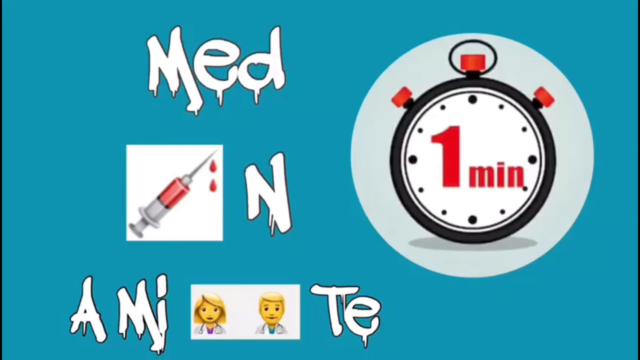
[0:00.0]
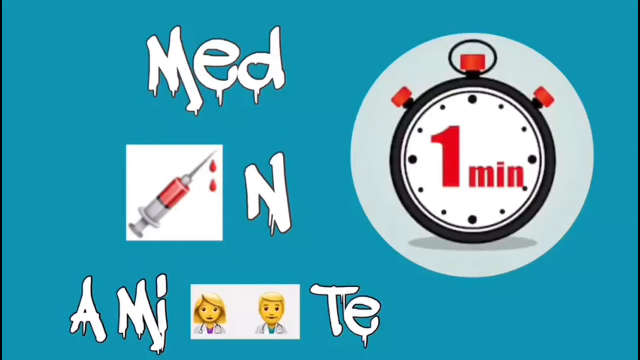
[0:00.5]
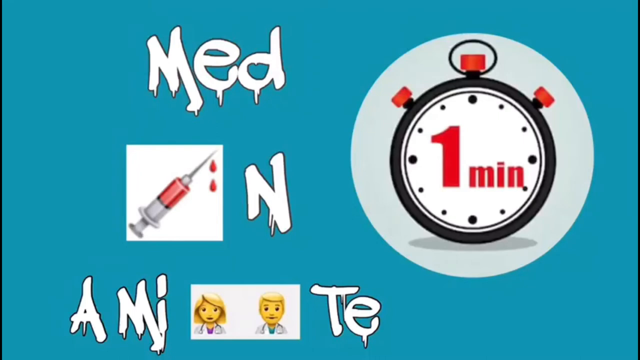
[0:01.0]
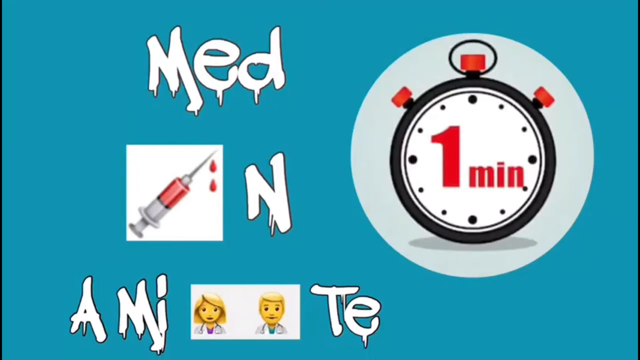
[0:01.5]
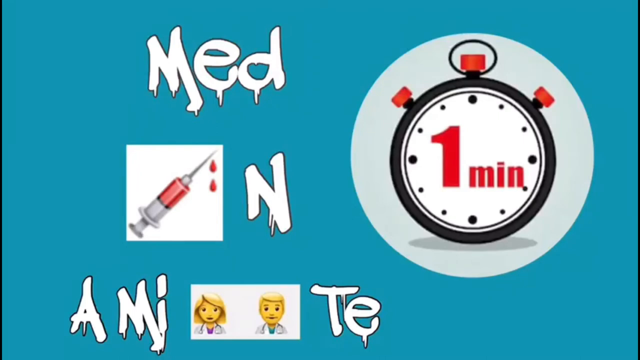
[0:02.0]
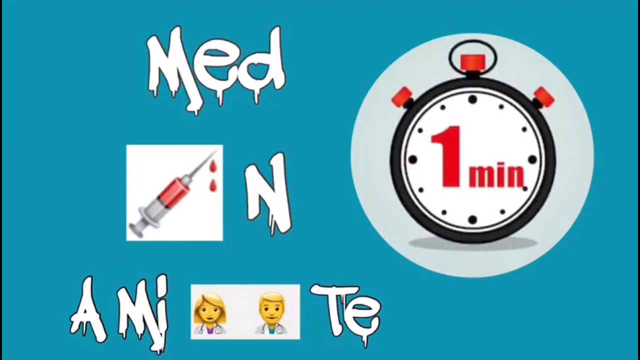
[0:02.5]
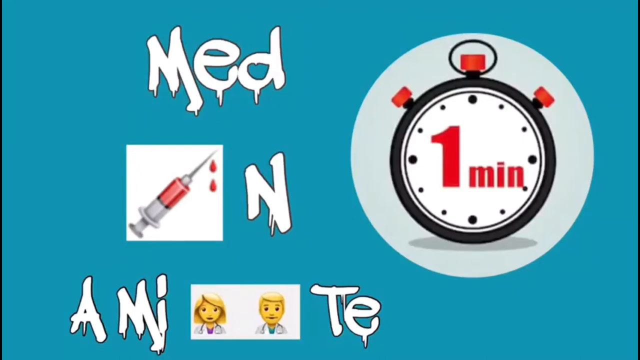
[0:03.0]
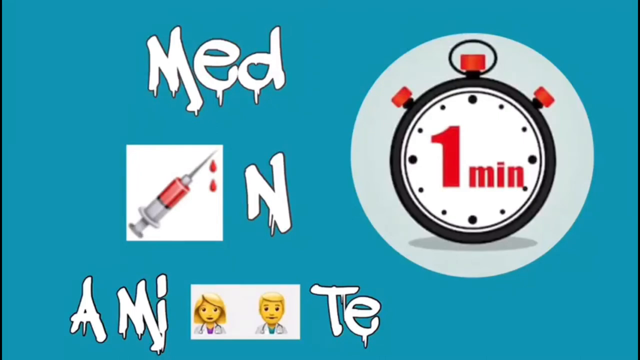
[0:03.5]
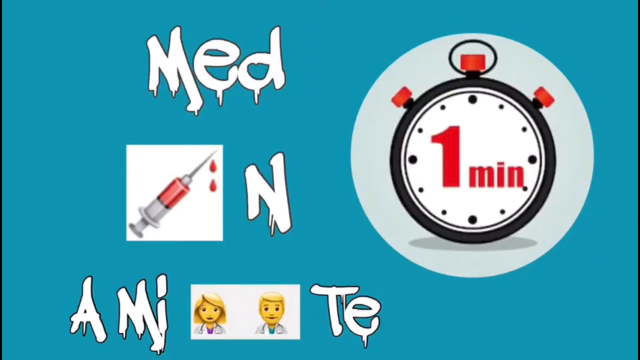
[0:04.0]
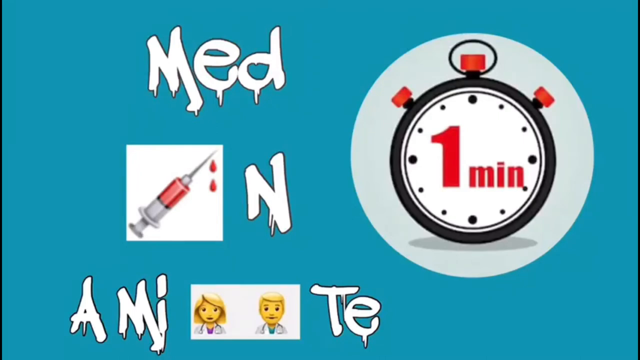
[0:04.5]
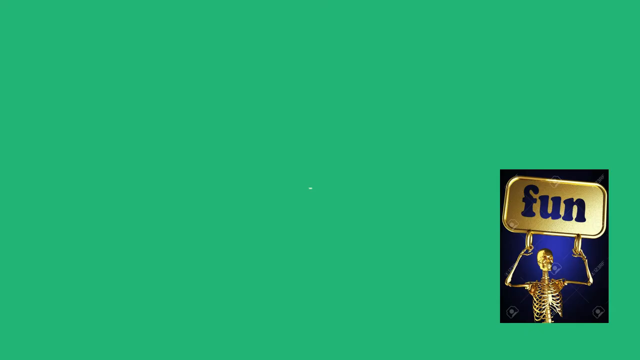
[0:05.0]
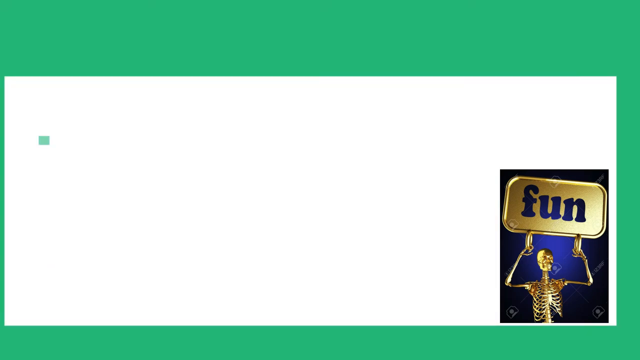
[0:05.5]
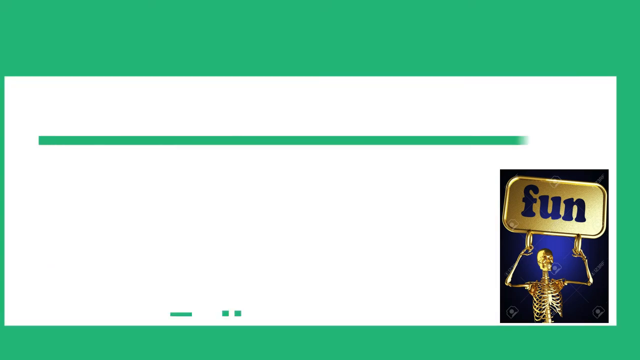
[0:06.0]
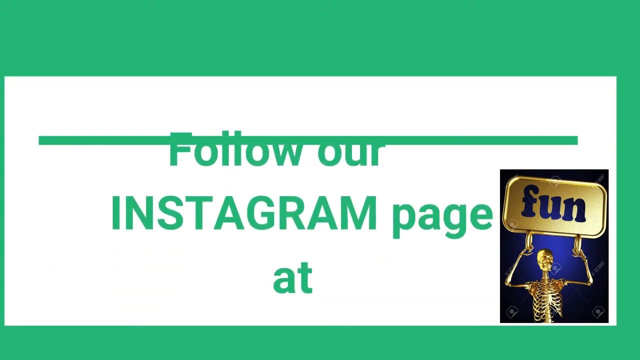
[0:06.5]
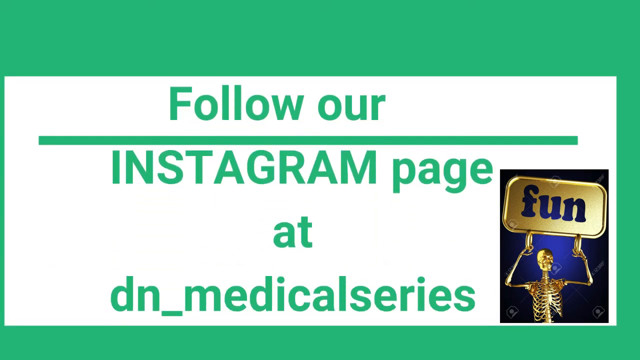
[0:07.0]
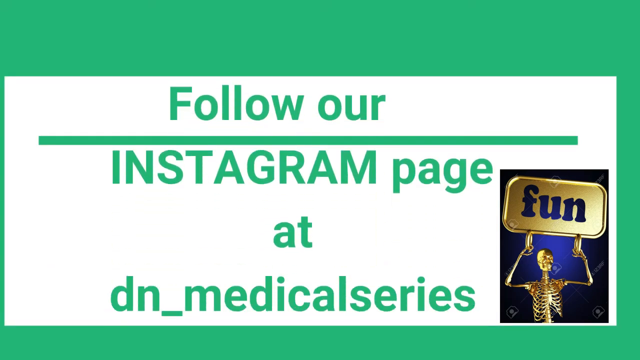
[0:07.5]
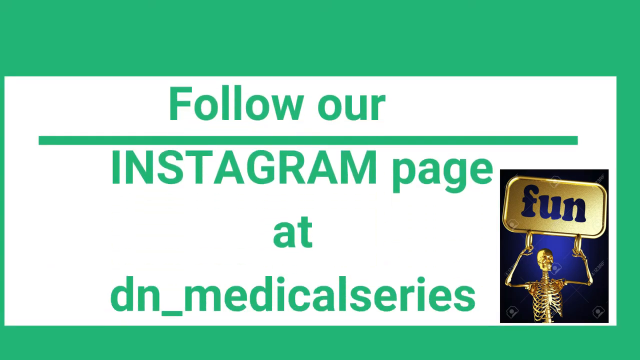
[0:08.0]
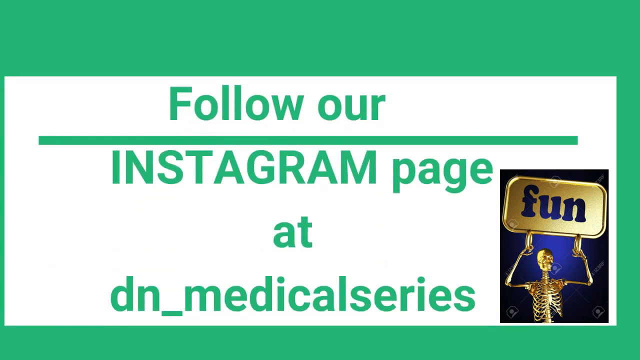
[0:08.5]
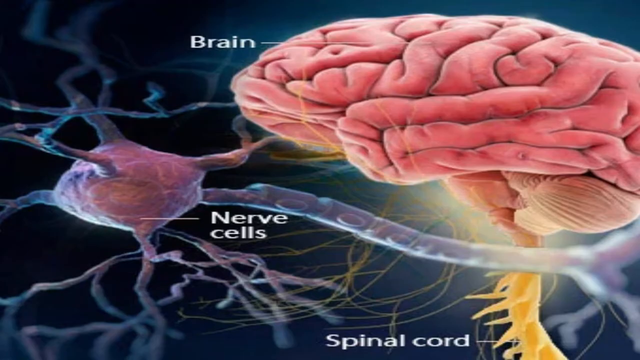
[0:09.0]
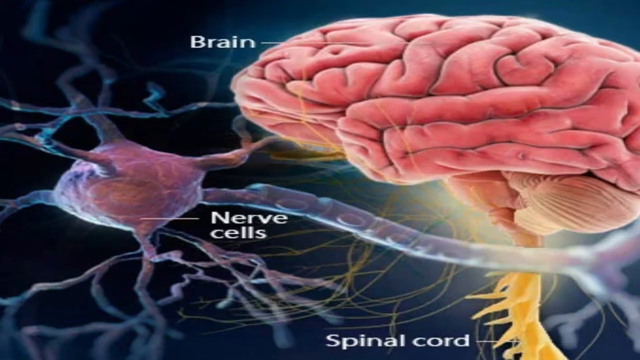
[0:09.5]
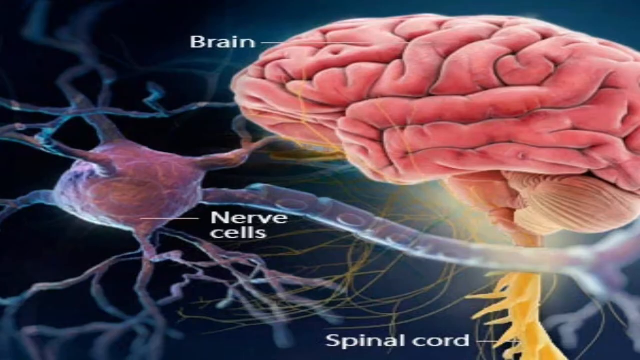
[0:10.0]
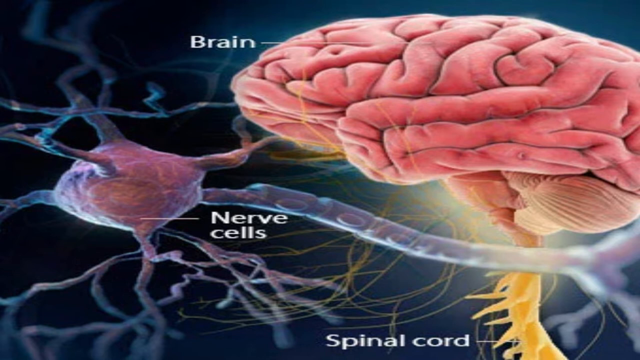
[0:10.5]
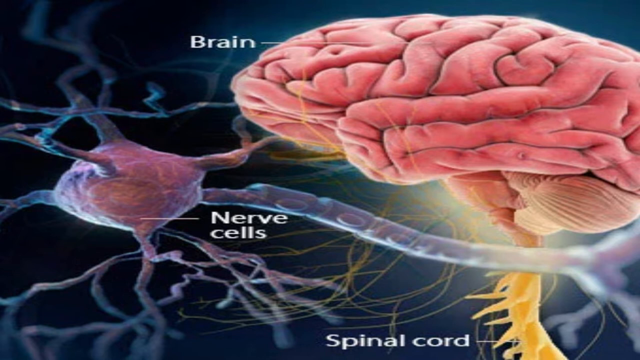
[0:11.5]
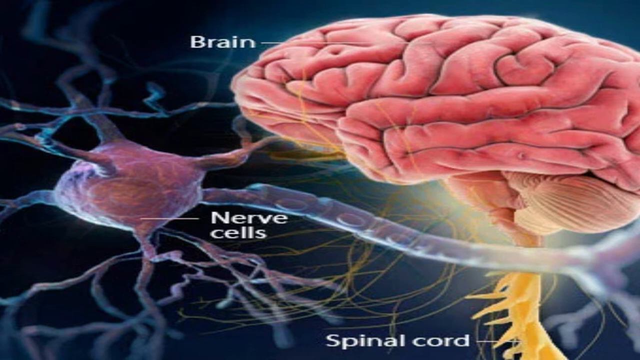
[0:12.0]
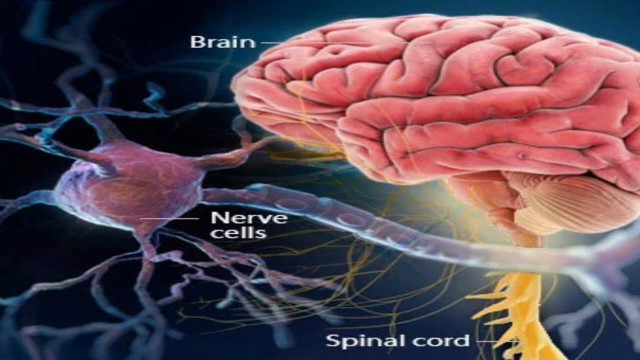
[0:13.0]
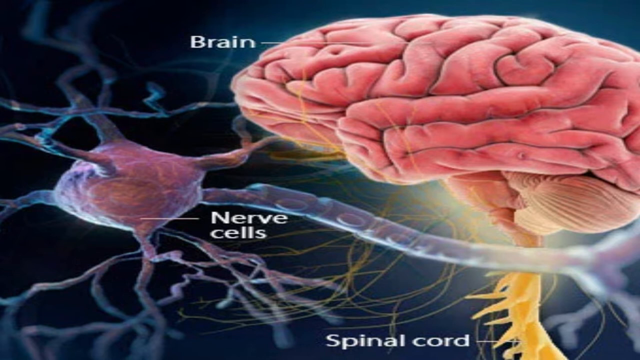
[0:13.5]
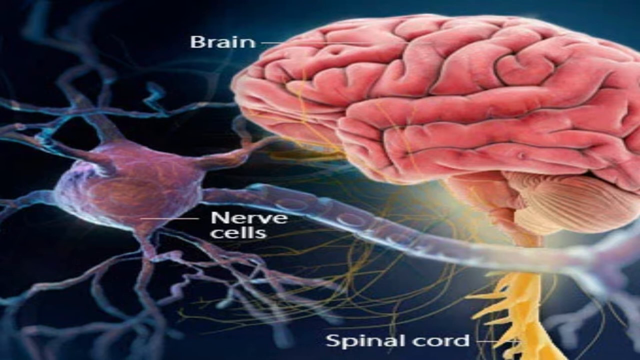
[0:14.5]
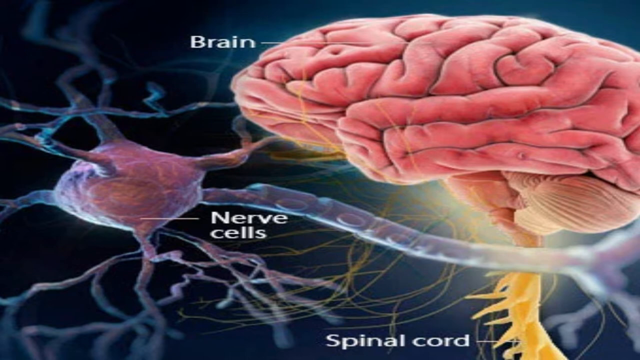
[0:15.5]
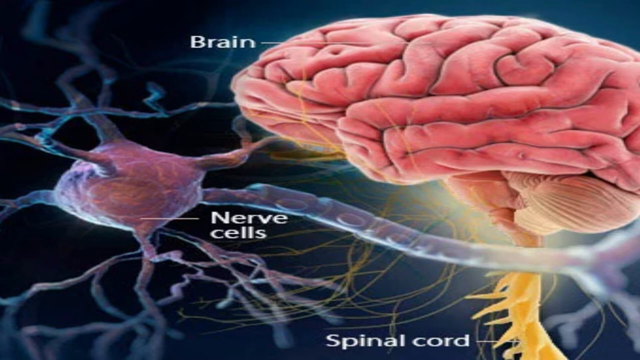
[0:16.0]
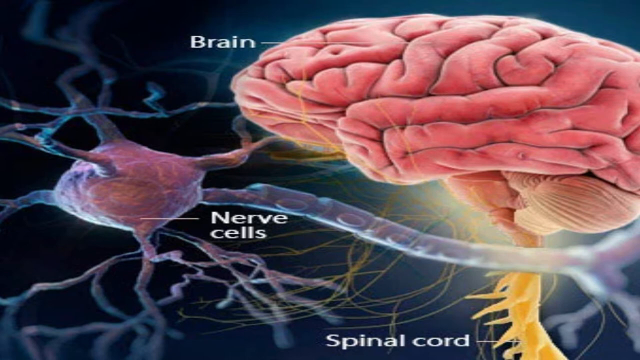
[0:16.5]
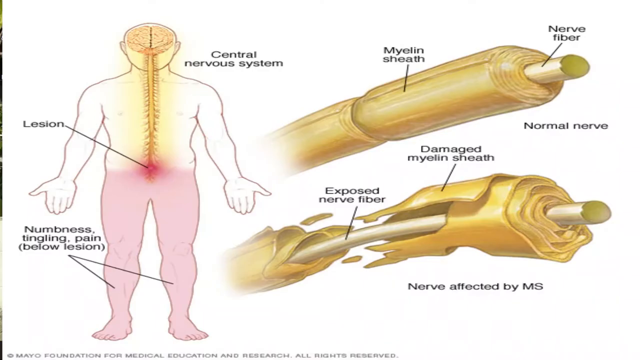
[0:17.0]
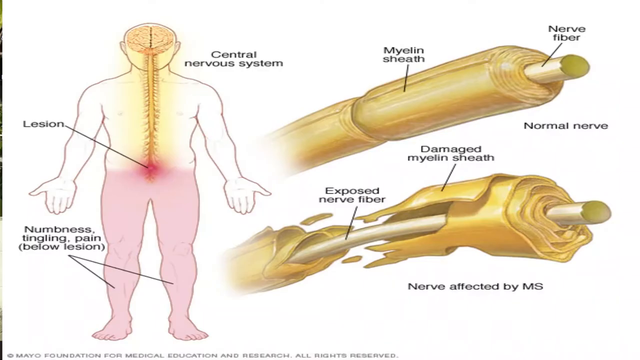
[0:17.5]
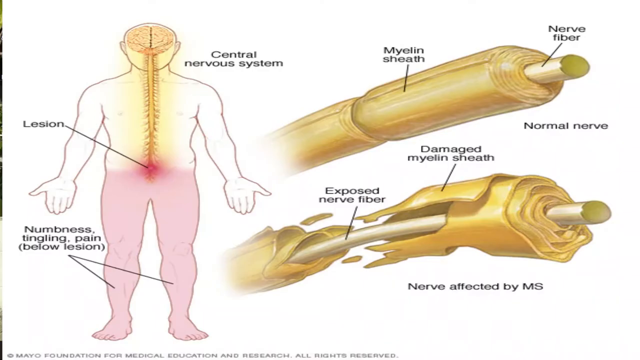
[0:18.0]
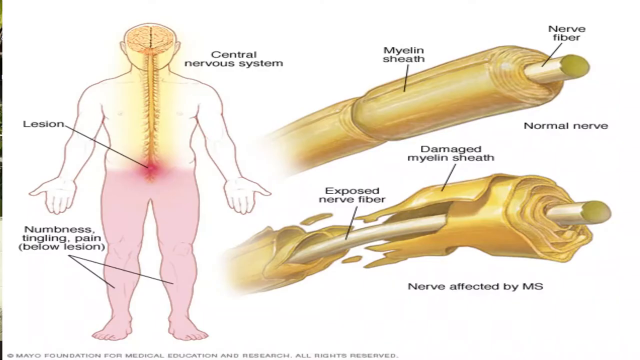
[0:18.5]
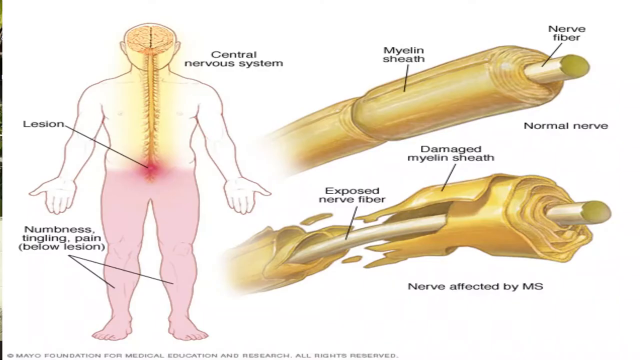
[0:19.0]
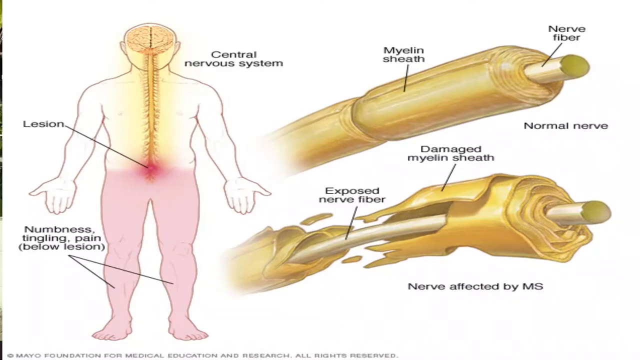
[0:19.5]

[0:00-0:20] A teal background shows the words "med in a minute." On the right side is a little stopwatch clock with "one min" inside it. The I in the word "in" is a picture of a syringe, and the N and the U in the word "minute" are emoji of what looks like a female and a male doctor. The screen changes to a green background, and a large rectangular white box pops up with green text inside reading "follow our instagram page at dn_medical series." On the right side, at the bottom of the white box, is a picture of a gold-looking skeleton from the waist up, holding up what looks like a big, flat, silver rectangular pan of some sort that says "fun" in dark blue lowercase letters. Next comes an image that looks like a drawing or digital rendition of a brain rather than a real picture. A large pink brain is on the right side, and to its left is a smaller round sack with many little root-like legs coming out of it; what seems to be a long, narrow tube runs from the end of the sack to the brain. The brain is labeled "brain" and the circular sack is labeled "nerve cells." The spinal cord attached to the bottom of the brain is a sort of yellow color and is labeled "spinal cord" next to it. Then an image with a white background appears. On the left side is an outline drawing of a man's body without much detail, except for a brain in his head and his spinal cord going down. At the bottom of his spinal cord, somewhat above his groin, is a pink, inflamed-looking circle. The lower half of the body appears to be shaded a light pink, while the top half is white. Labels read "central nervous system," "lesion" at the red inflamed spot at the bottom of the spinal cord, and "numbness, tingling, pain," pointing to both legs. To the right appears to be a close-up image of a normal nerve and a nerve affected by MS: a light brown tube that seems rolled up, with a long cylindrical rod in the middle. The one at the top looks whole and healthy, while the nerve underneath looks like it is breaking apart and not rolled up as tight. The myelin sheath, nerve fiber, damaged myelin sheath, and exposed nerve fiber are labeled on this image.